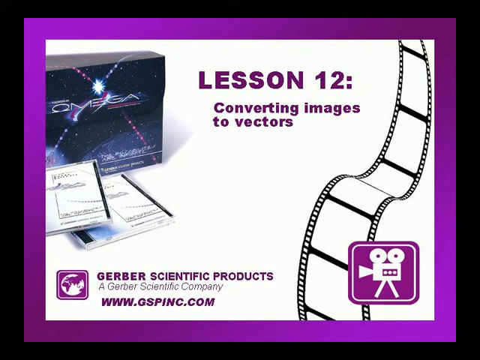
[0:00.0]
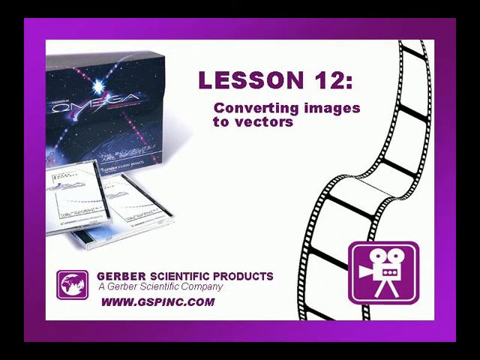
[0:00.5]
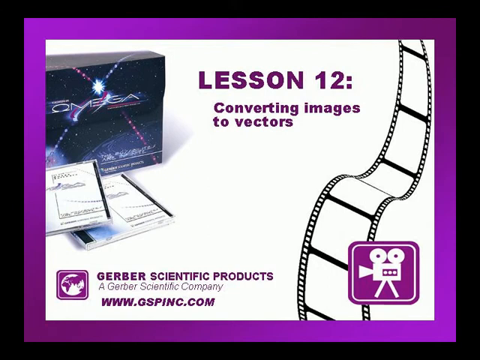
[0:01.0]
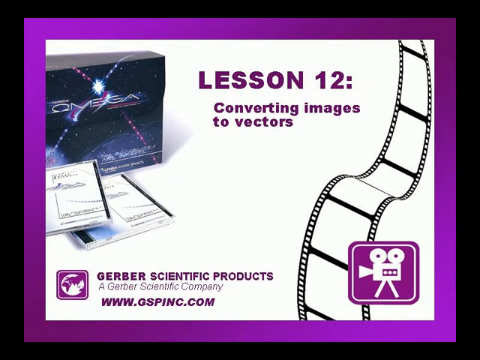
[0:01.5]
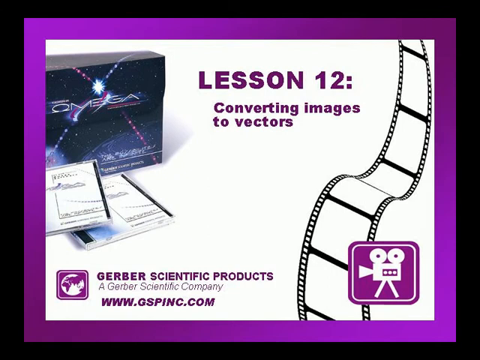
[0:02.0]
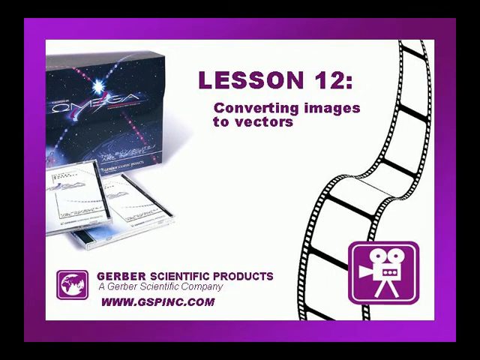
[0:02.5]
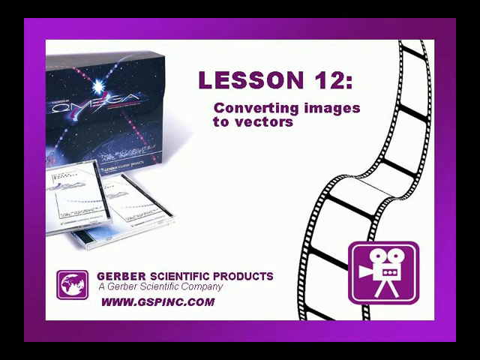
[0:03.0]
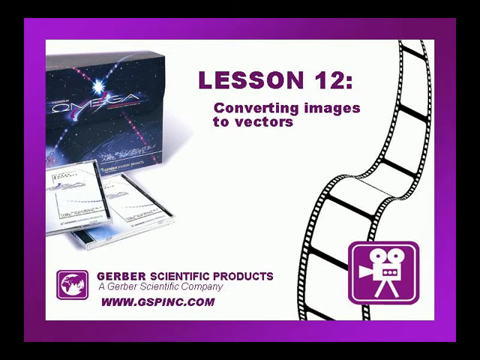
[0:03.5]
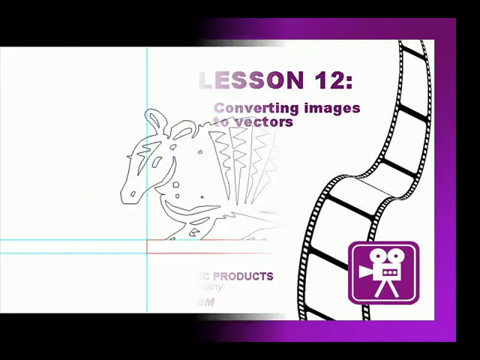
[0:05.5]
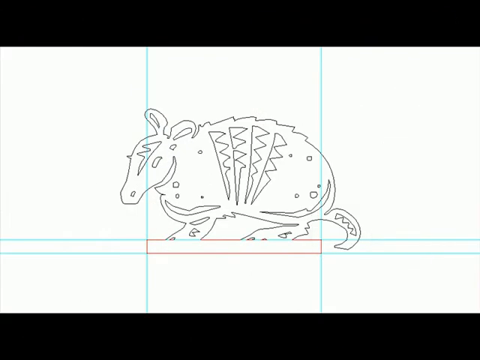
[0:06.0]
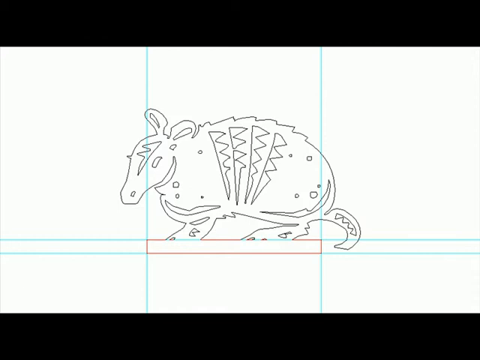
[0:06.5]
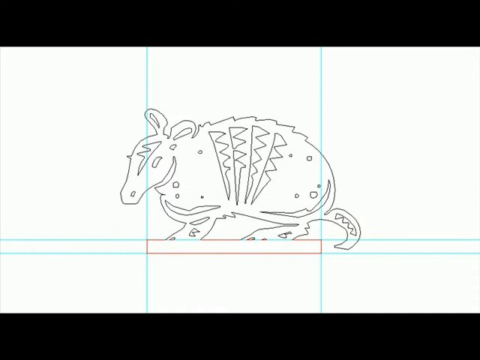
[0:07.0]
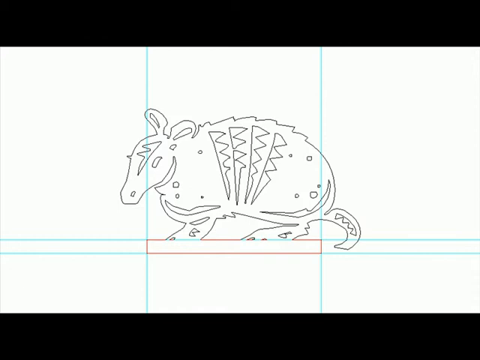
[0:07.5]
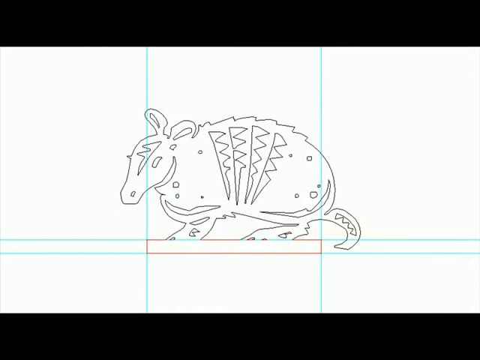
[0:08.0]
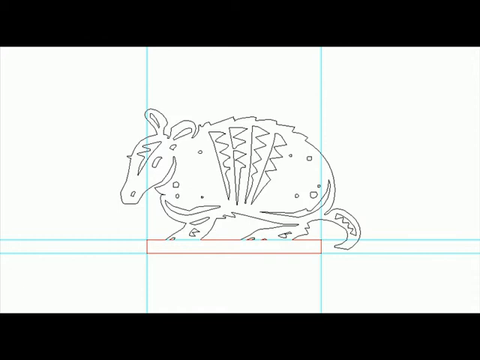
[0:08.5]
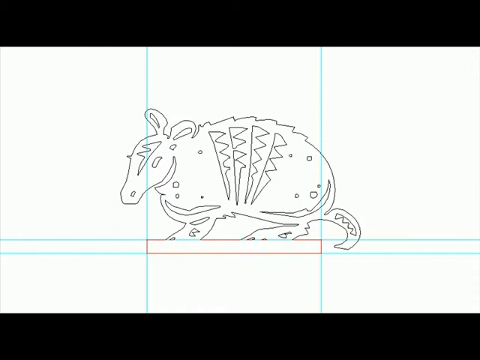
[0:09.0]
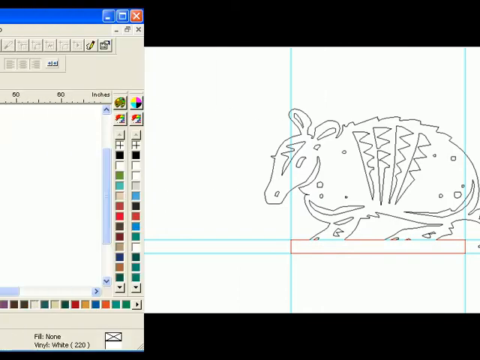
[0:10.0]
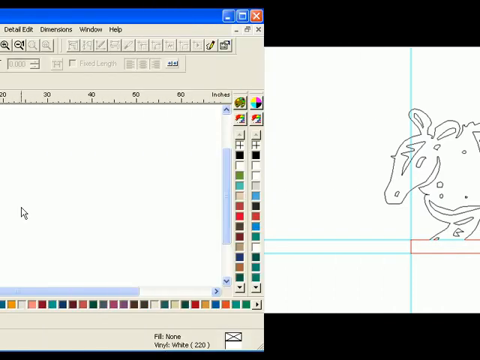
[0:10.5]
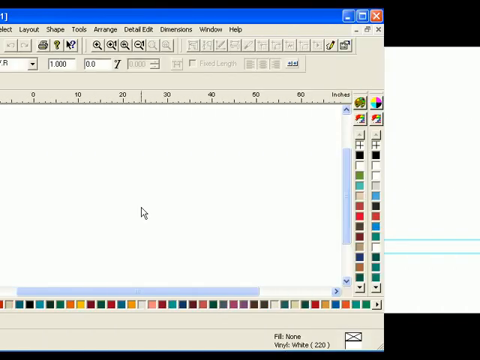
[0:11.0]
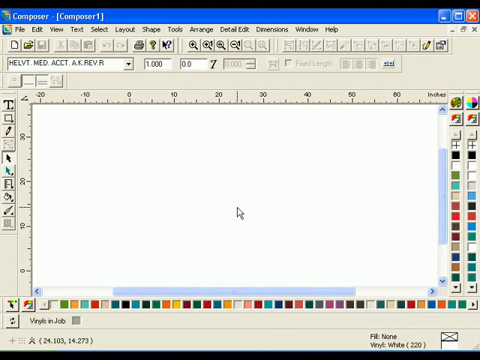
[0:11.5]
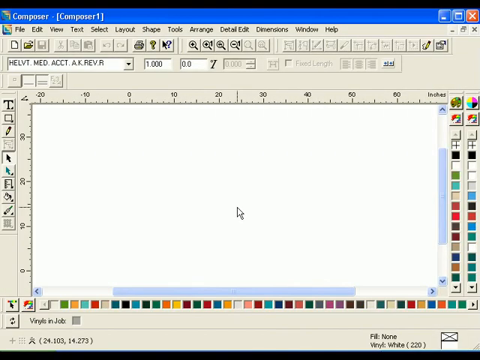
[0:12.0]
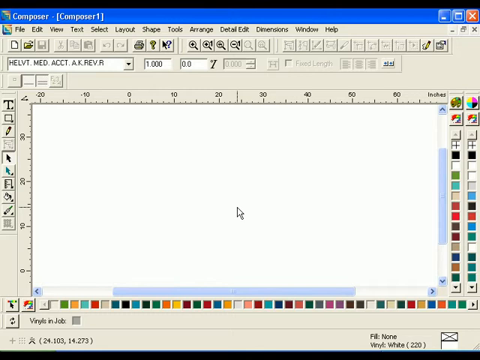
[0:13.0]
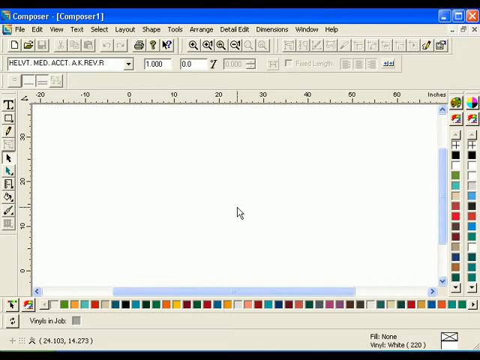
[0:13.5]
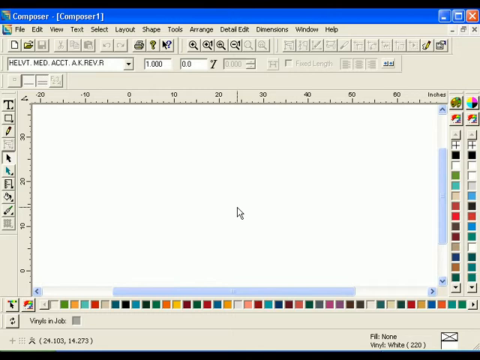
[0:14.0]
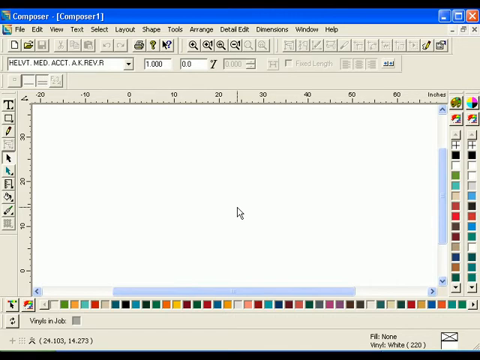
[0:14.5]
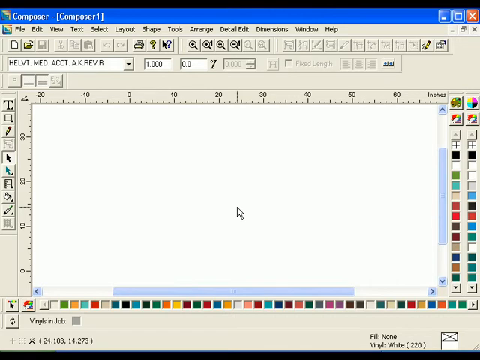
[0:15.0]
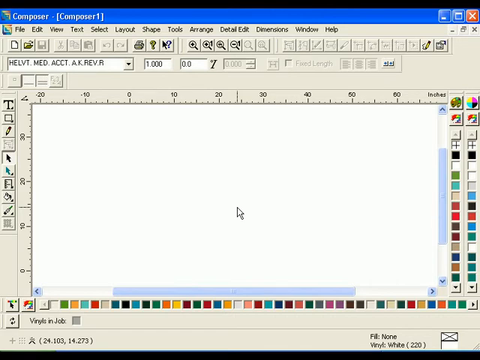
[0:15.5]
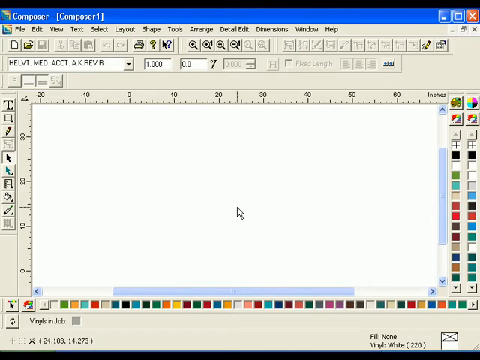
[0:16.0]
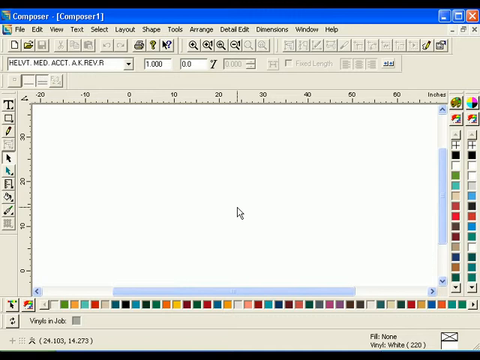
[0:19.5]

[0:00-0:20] The video opens on an introduction screen with what looks like a very thick purple border. At the top right, purple text reads "Lesson 12, converting images to vectors." On the right side there appears to be a black-and-white film running downward. At the bottom right is a purple square with a white icon that looks like a camcorder. At the bottom left, purple text reads "Gerber Scientific Products and Gerber Scientific Company, www.gspink.com." At the top left there appear to be two CDs and a black box with the white text "Omega" on it. The video then slides from left to right to what looks like a black line drawing of an armadillo facing left, apparently standing on a rectangular platform drawn with a red line. Teal lines are drawn upward from the edges of the red rectangle, and from its top and bottom. The video slides from left to right again to what looks like some sort of application. At the top left it reads "composer" and then, in brackets, "composer one." The menu headers at the top read "file edit view text select layers shape tools arrange detail edit dimensions window and help." There appear to be many colored squares around it, with a blank white canvas in the middle and many colored squares at the bottom and on the right side. It looks almost like a paint application, but it is not.